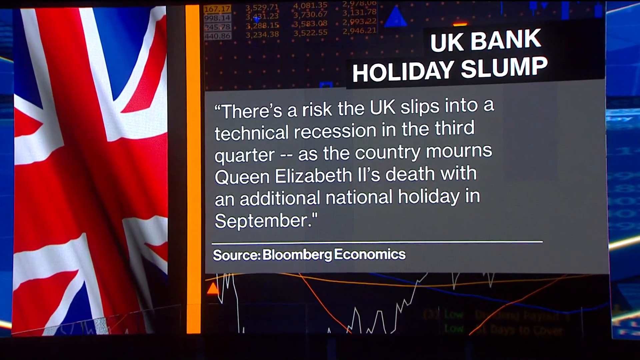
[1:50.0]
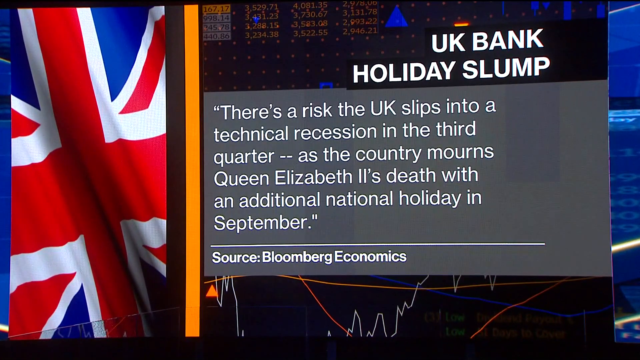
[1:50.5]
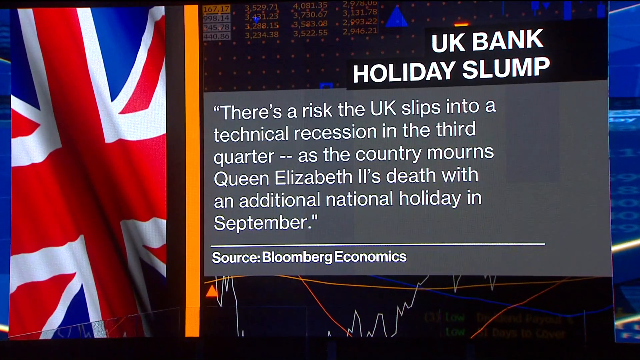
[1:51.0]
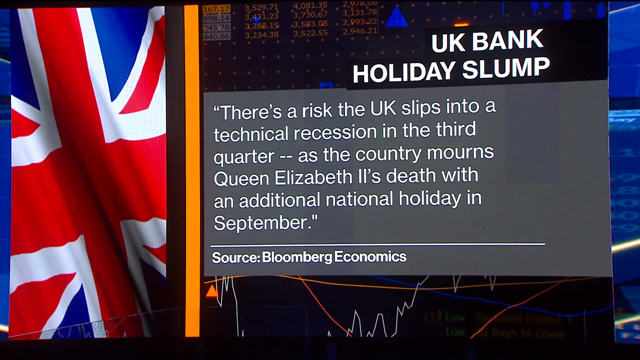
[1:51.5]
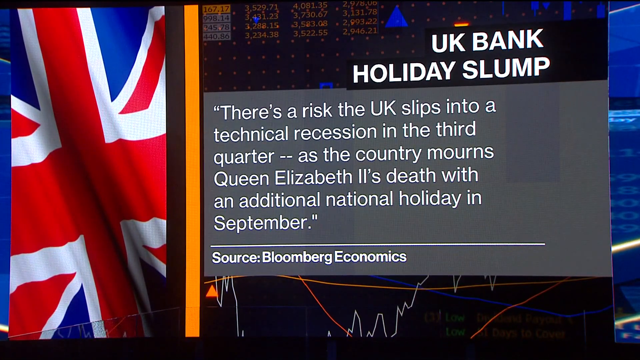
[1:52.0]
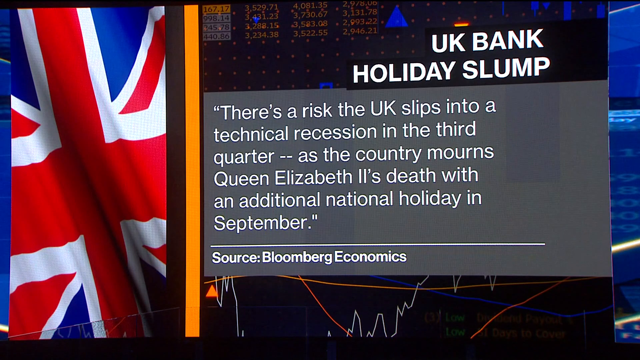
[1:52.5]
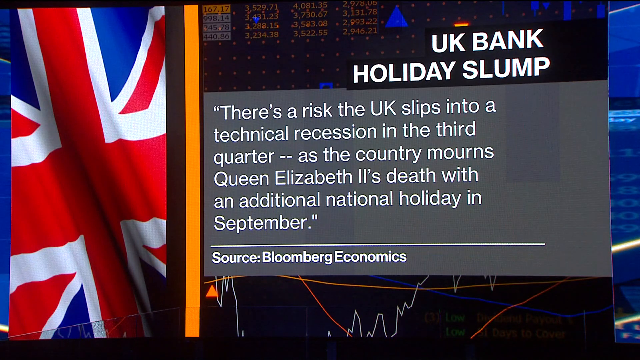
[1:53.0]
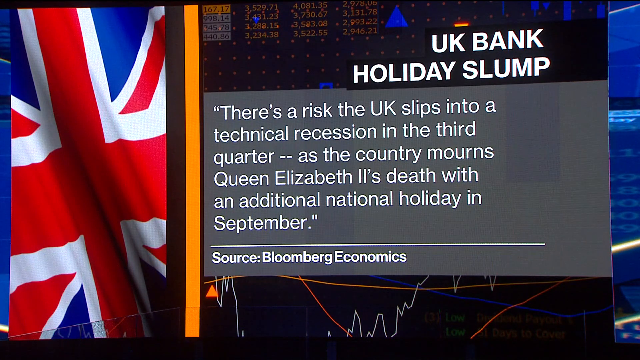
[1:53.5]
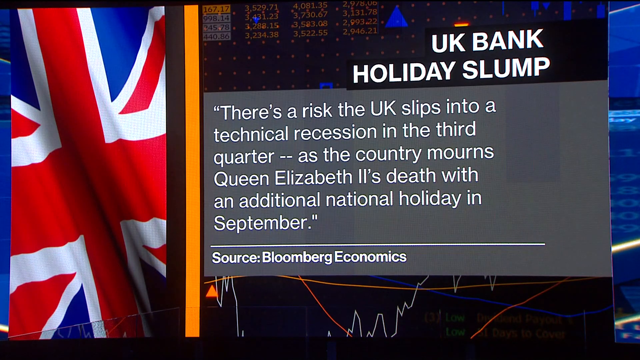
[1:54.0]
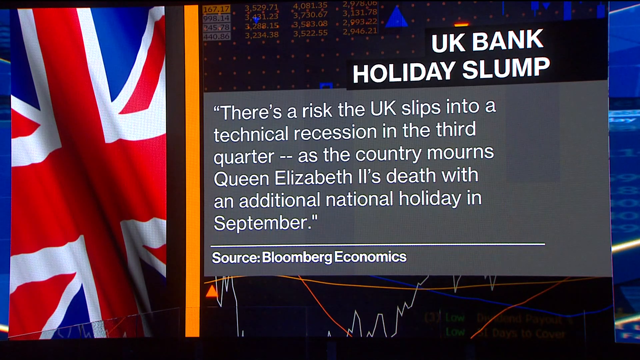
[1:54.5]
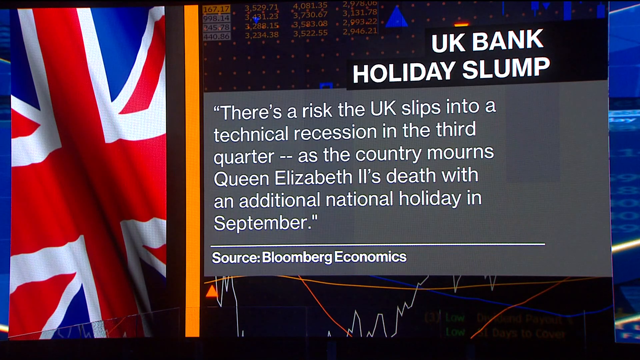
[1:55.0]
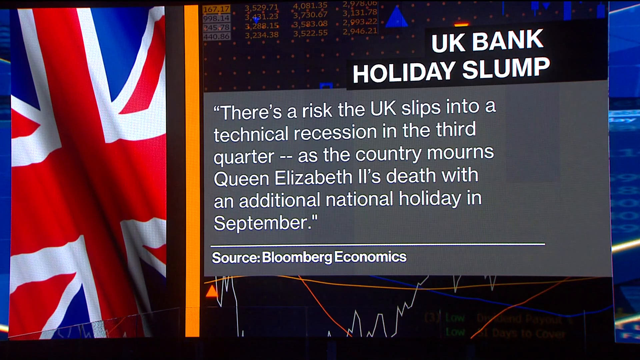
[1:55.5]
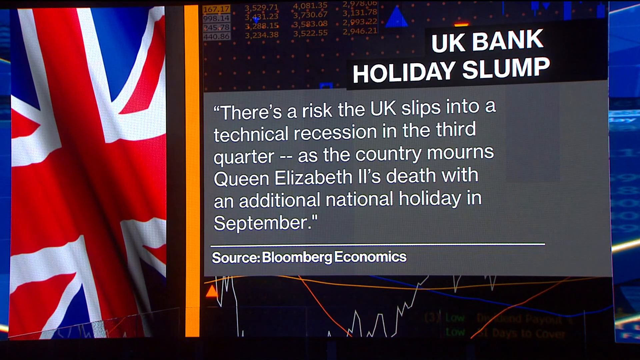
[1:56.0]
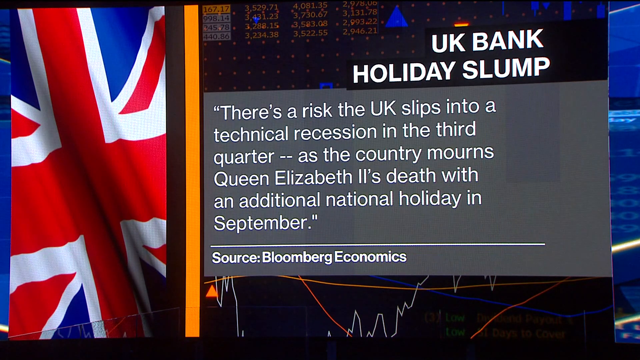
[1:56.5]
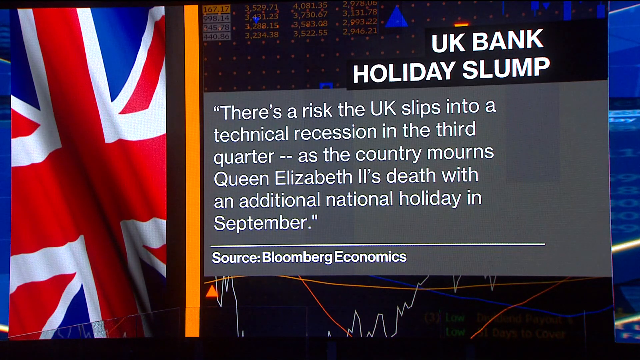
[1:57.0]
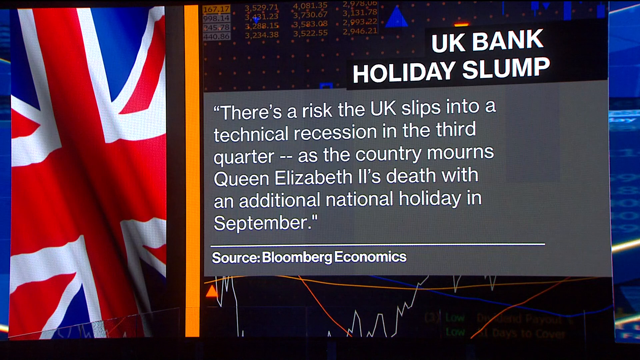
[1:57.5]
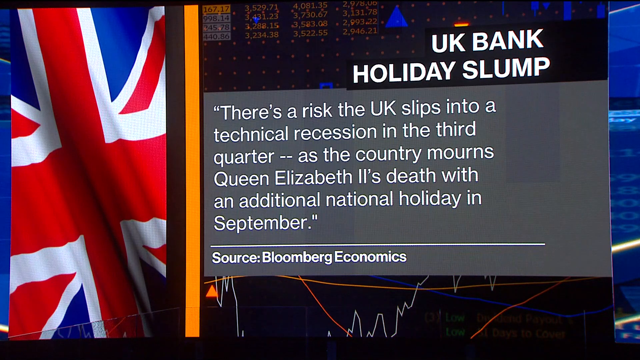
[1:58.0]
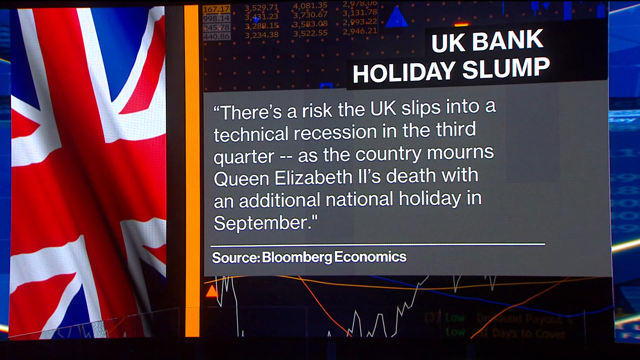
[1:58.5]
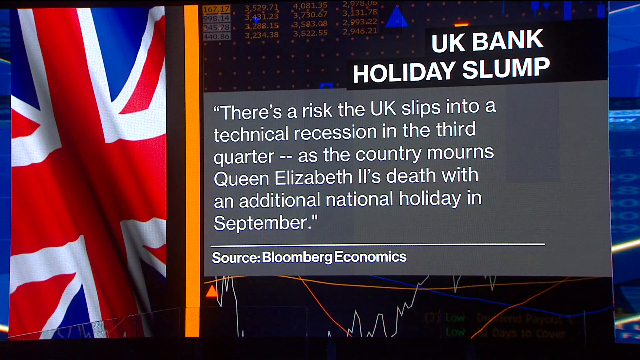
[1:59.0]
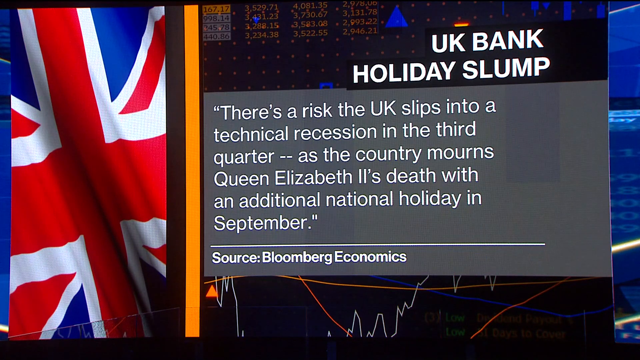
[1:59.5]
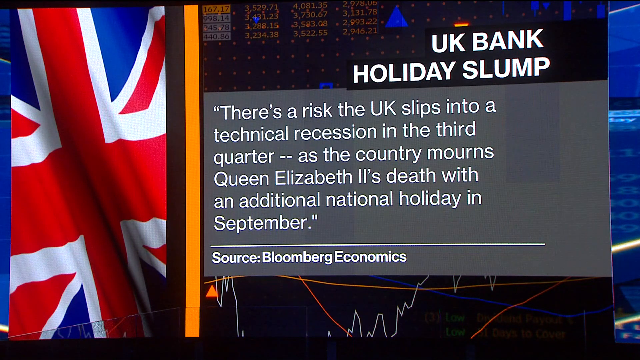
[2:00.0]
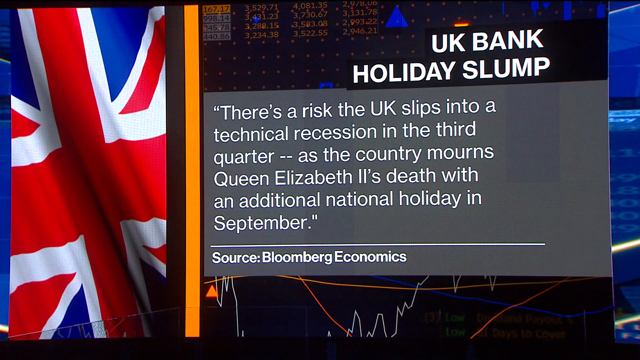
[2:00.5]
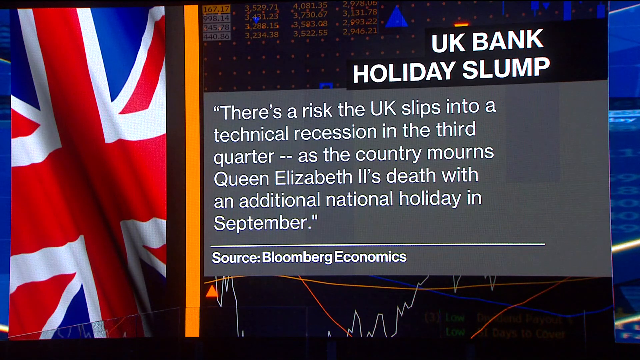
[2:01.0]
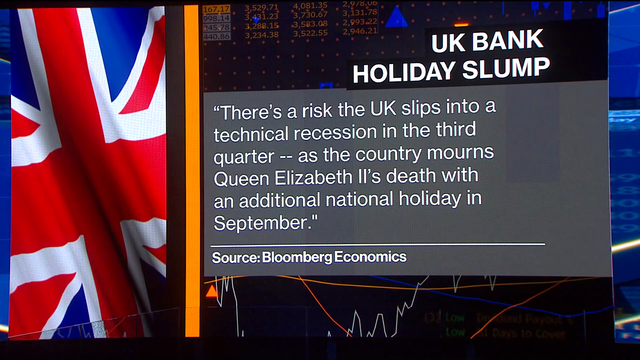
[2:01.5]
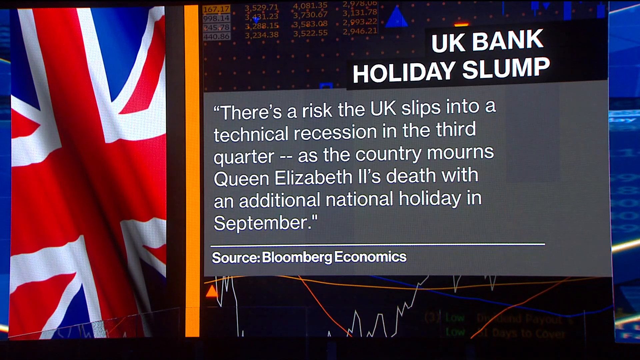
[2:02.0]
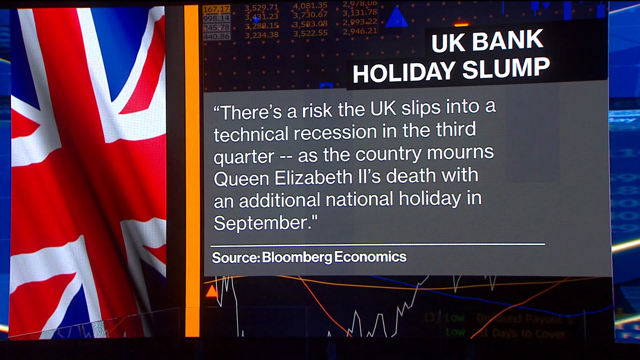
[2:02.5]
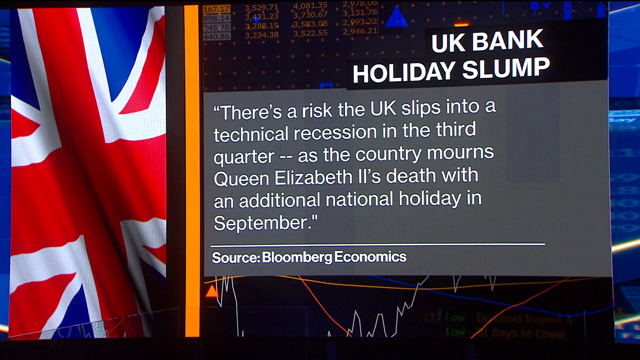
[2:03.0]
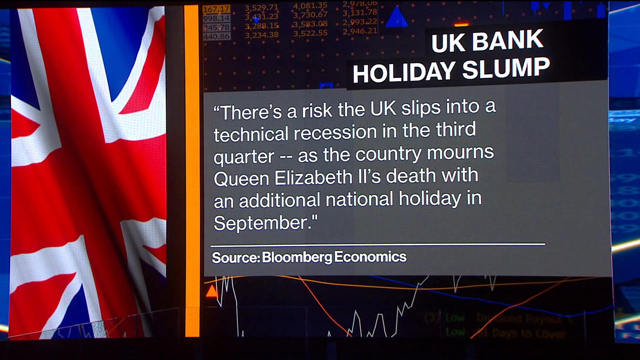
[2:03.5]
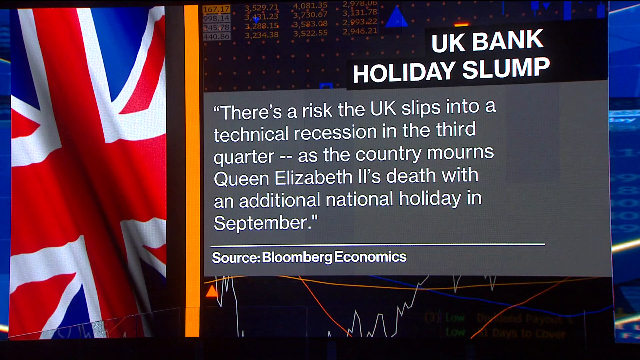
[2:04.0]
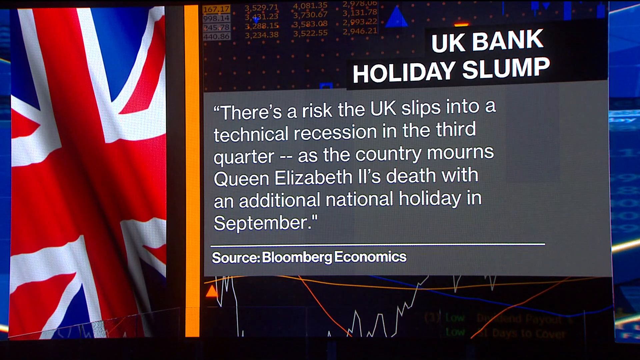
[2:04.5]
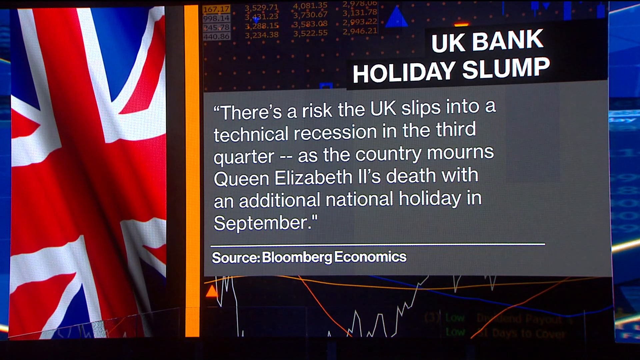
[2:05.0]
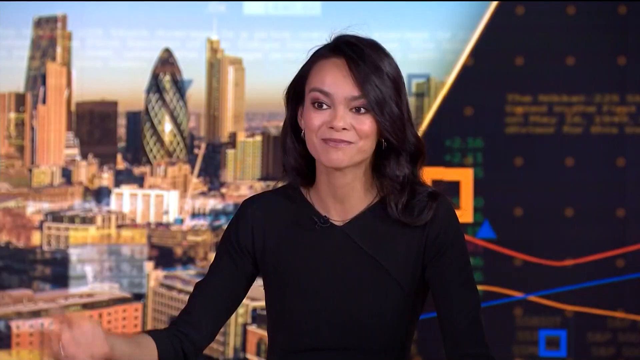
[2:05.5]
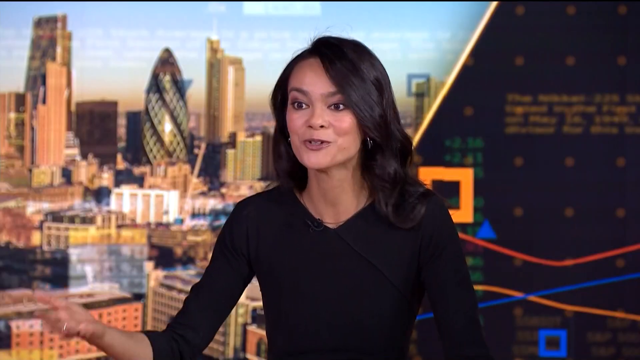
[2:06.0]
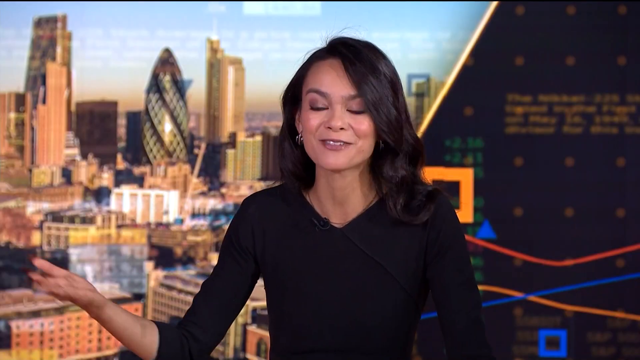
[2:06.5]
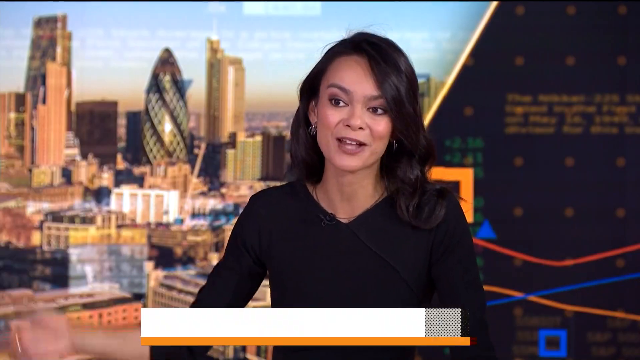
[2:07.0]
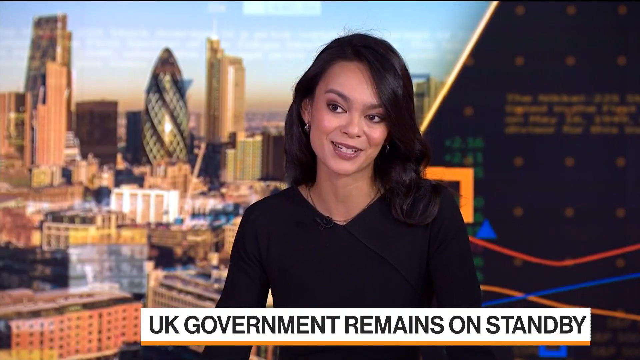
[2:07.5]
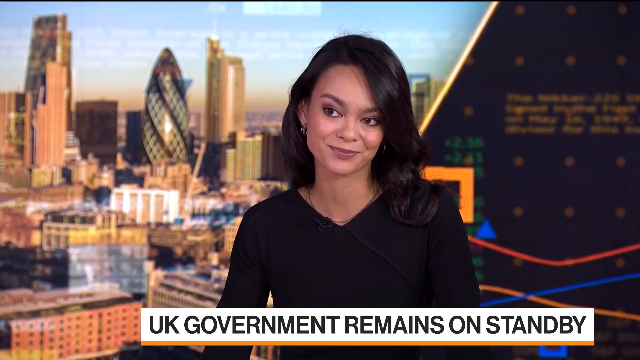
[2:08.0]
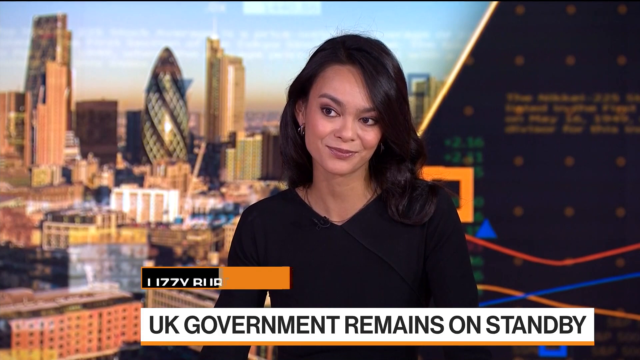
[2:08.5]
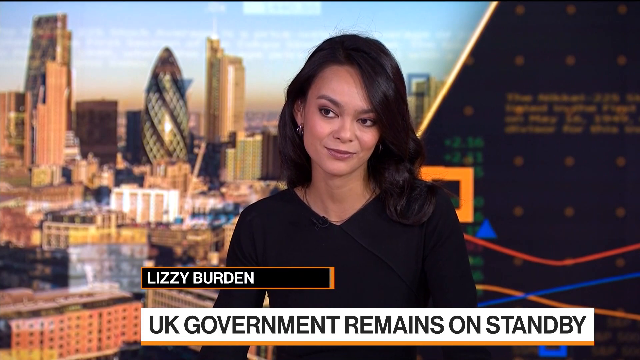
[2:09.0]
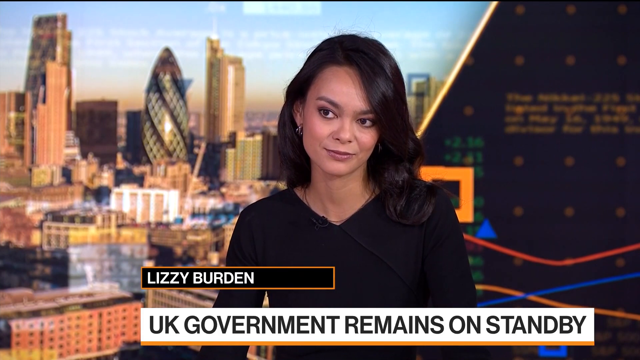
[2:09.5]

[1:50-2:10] The graphic is shown for most of the time, along with more of Lizzie Burden. In bold letters at the top it reads "UK Bank holiday slump," and in smaller letters in the body, in quotation marks: "There's a risk the UK slips into a technical recession in the third quarter -- as the country mourns Queen Elizabeth II's death with an additional national holiday in September," followed by "Source: Bloomberg economics." Part of a British flag graphic is shown next to it. This is followed by more of Lizzie Burden talking.